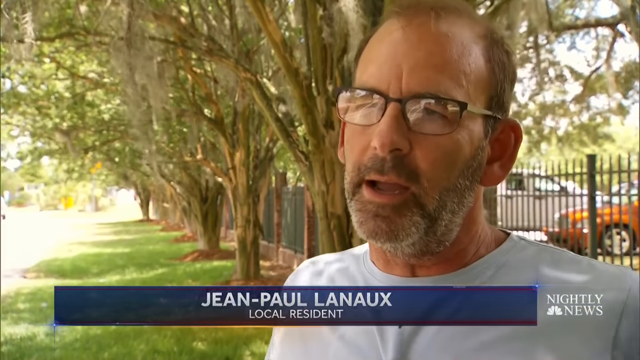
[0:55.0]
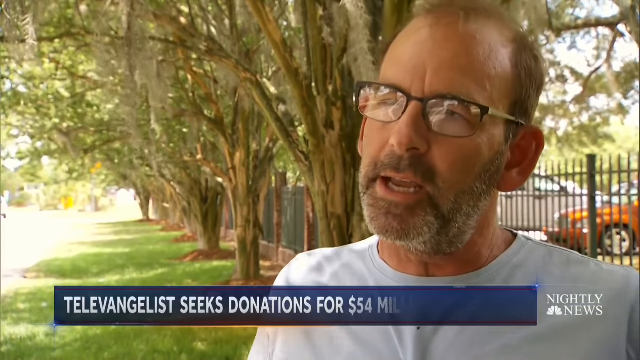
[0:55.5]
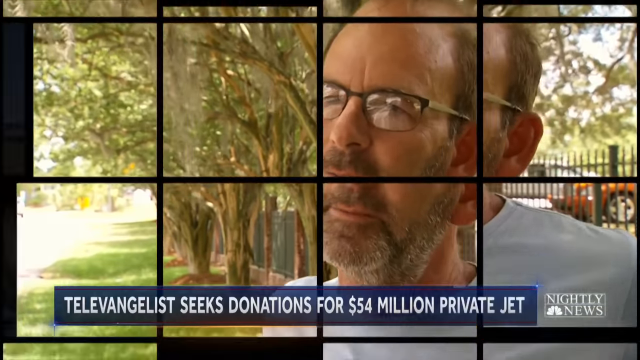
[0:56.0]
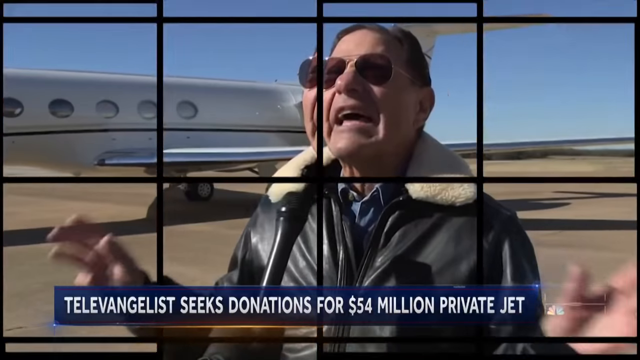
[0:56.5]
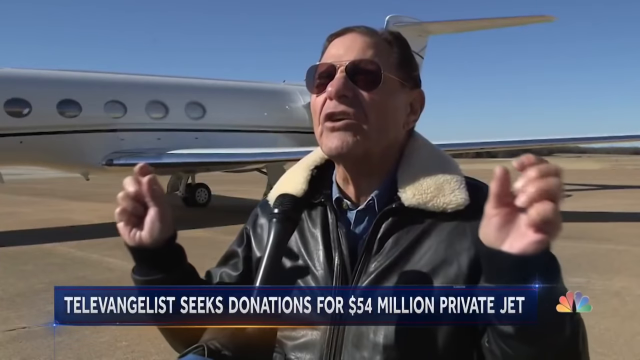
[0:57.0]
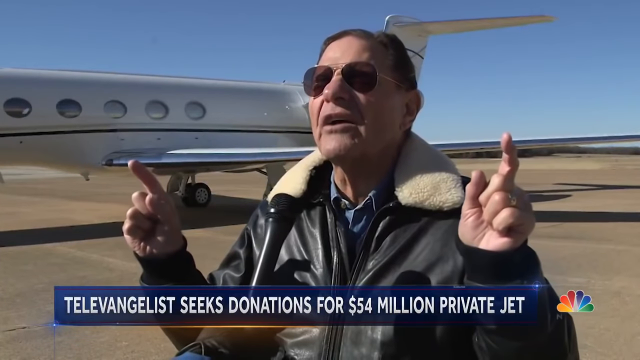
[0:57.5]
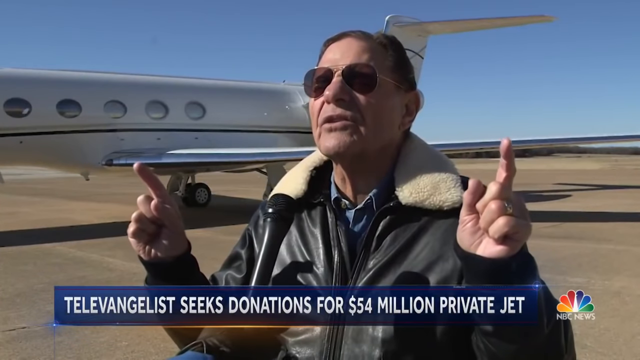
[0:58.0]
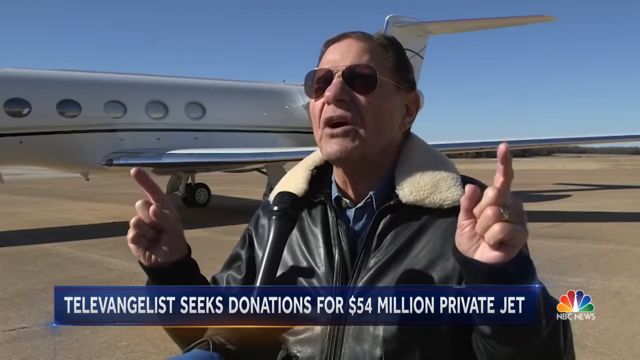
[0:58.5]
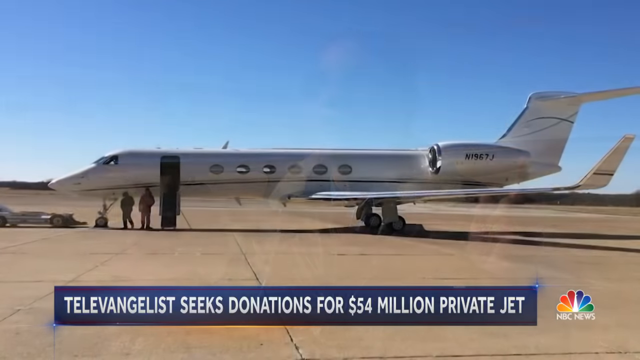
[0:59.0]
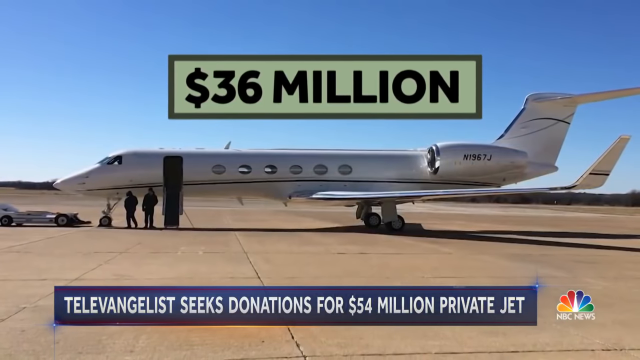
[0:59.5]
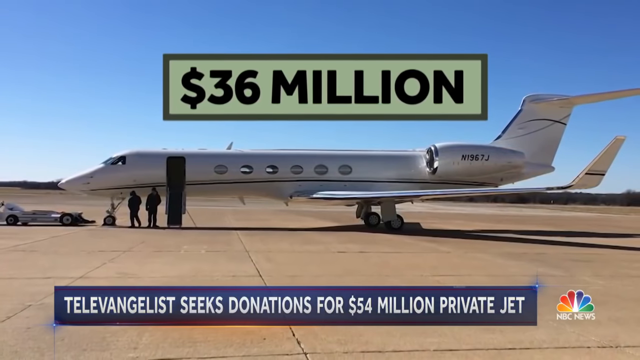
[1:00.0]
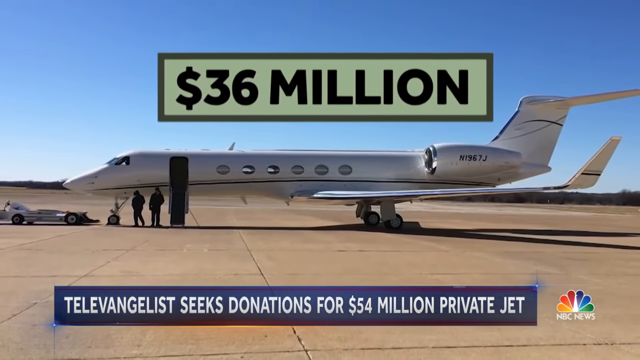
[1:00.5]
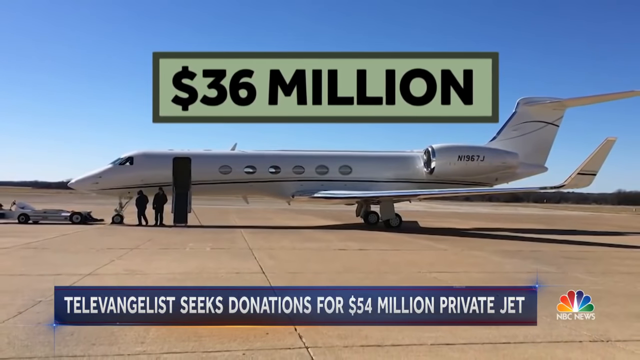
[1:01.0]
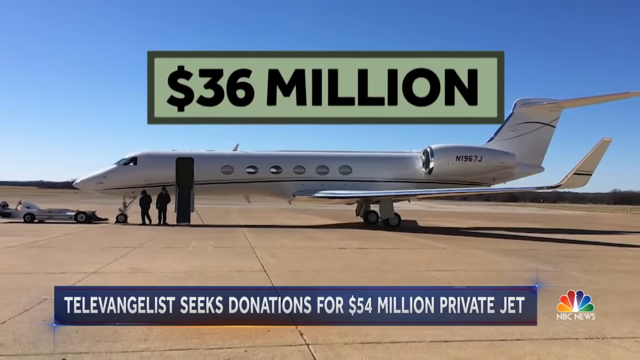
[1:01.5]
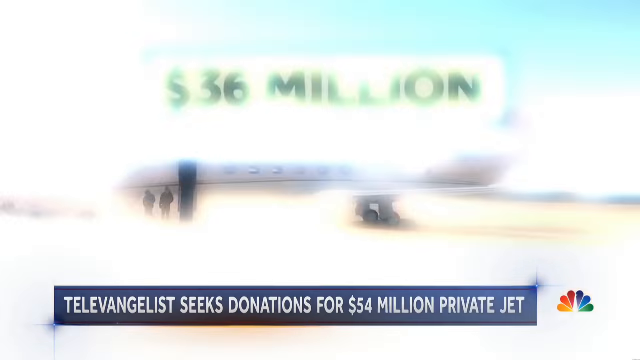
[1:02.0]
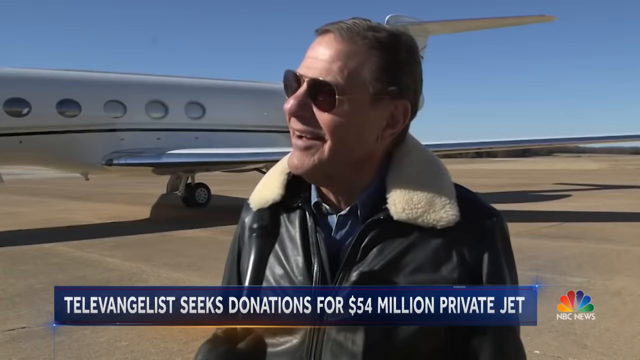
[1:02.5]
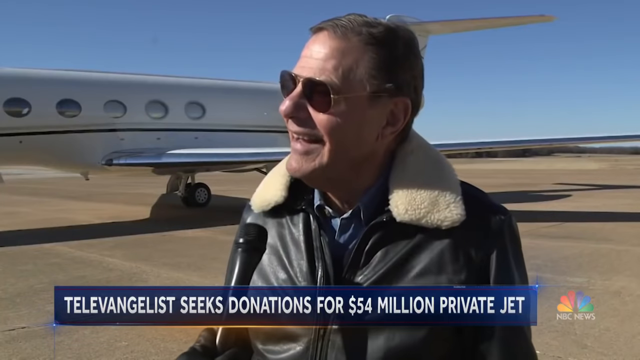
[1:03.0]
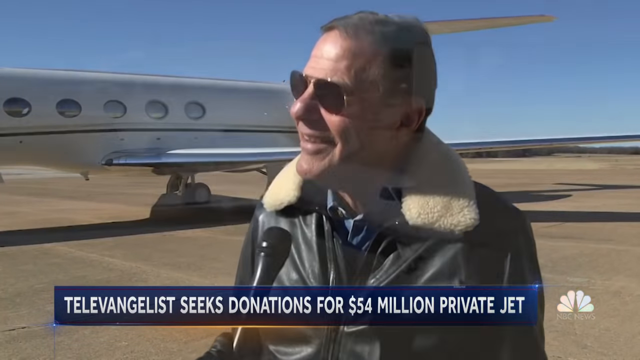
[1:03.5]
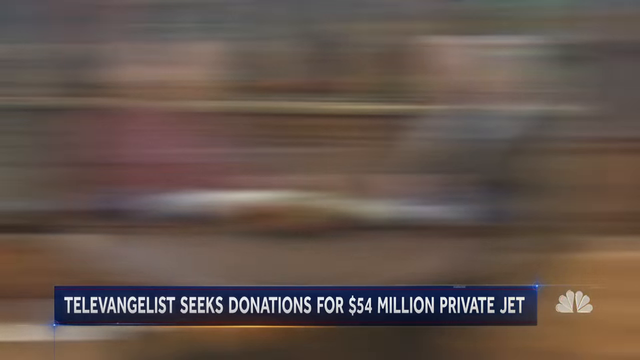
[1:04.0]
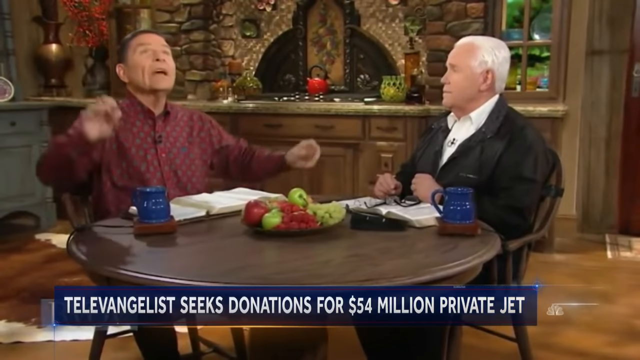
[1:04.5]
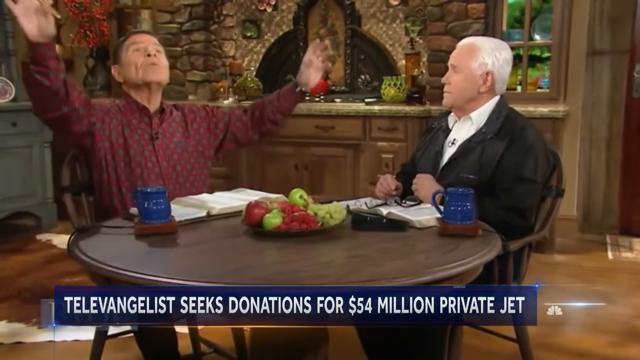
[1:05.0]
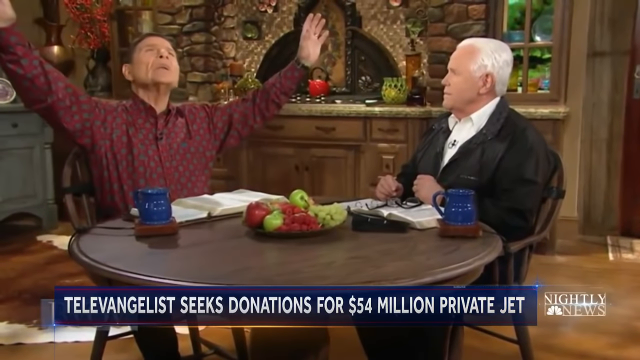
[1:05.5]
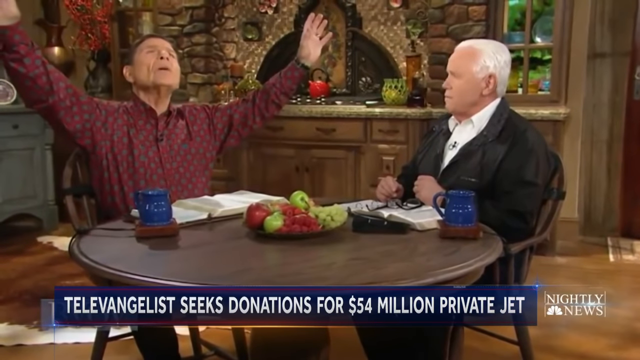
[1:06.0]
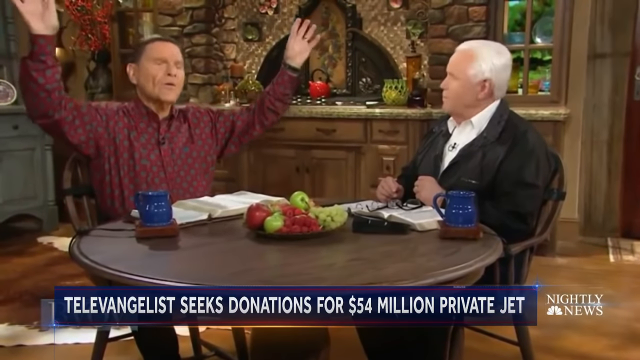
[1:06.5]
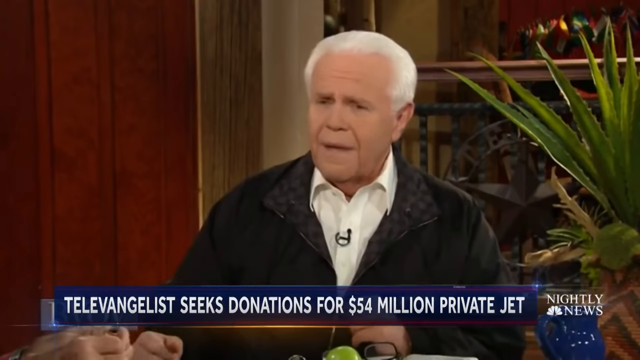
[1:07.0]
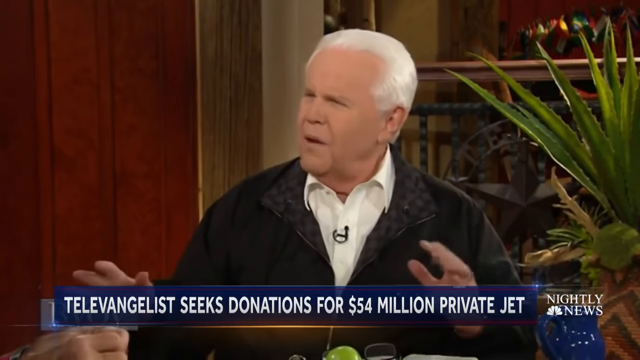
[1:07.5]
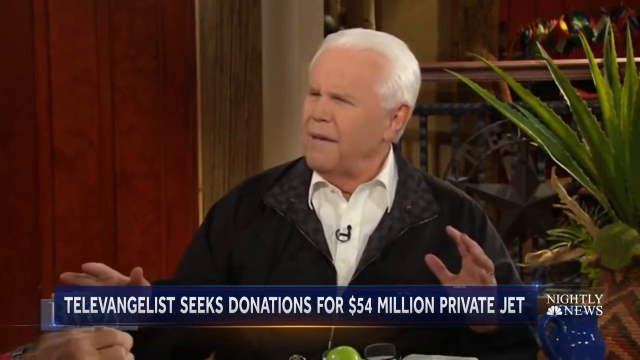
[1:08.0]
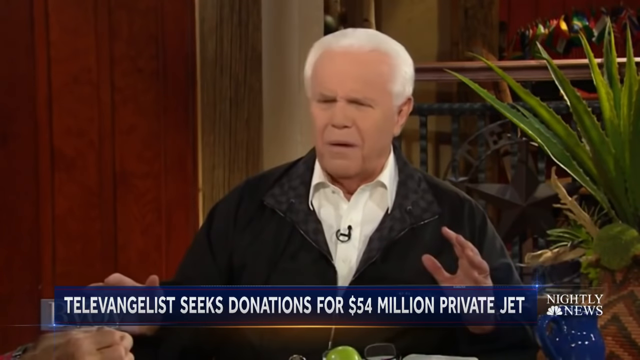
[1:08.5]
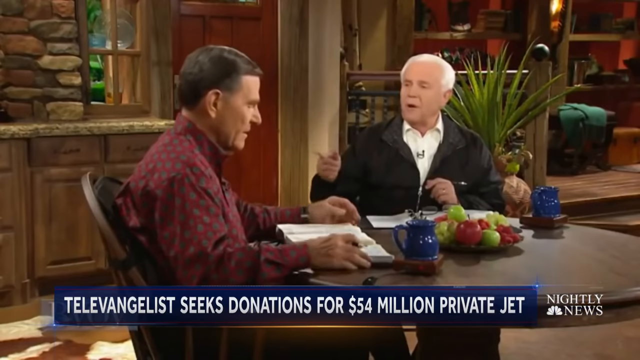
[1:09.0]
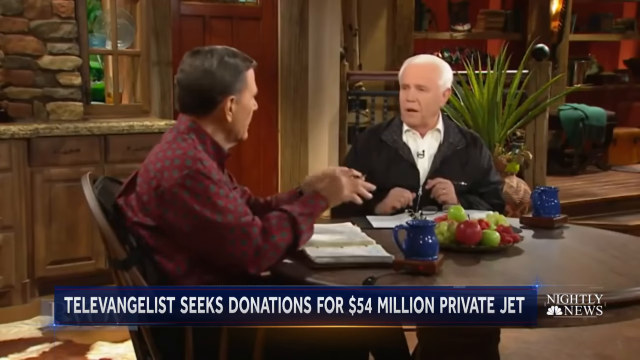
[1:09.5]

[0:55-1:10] The resident appears, and then the scene switches to an airfield with a large jet in front of it. A couple of different men sit at a table raising their hands in the air as if praying. One of these men is shown in front of a private jet that costs $36 million; the other is the televangelist asking for $54 million. The $36 million jet does not look quite as elaborate as the other one. Each man speaks to reporters.